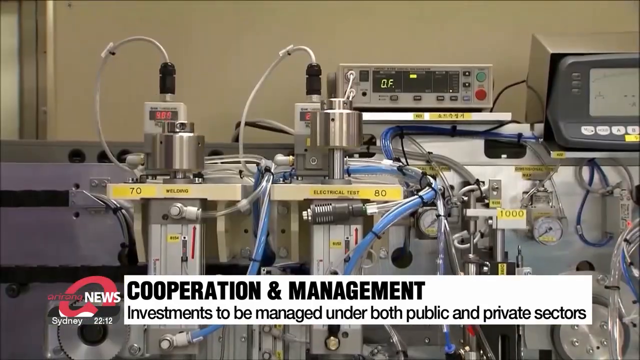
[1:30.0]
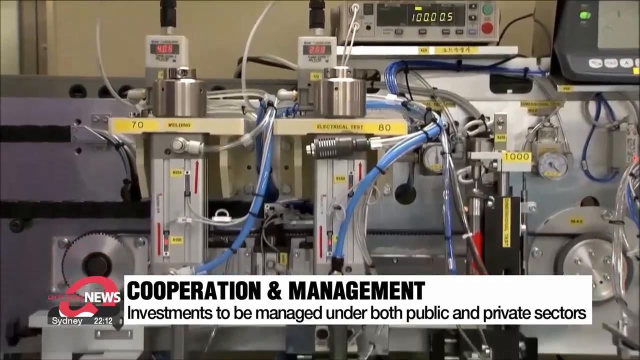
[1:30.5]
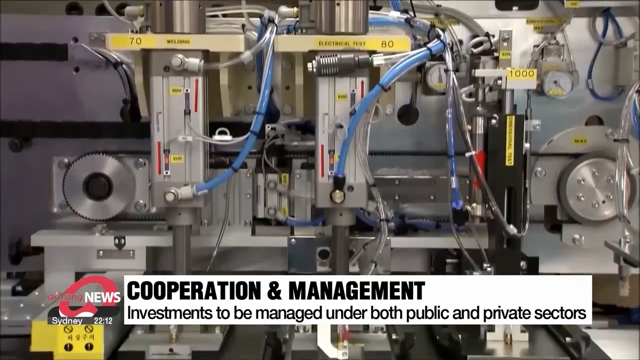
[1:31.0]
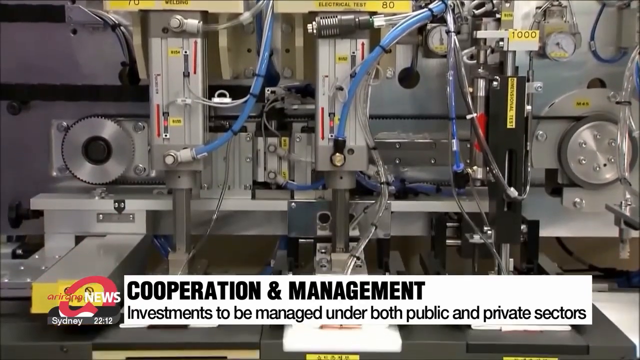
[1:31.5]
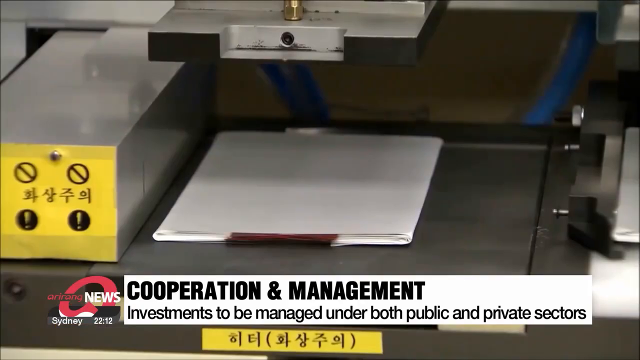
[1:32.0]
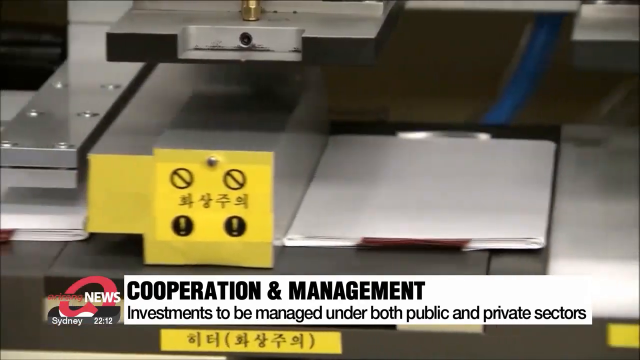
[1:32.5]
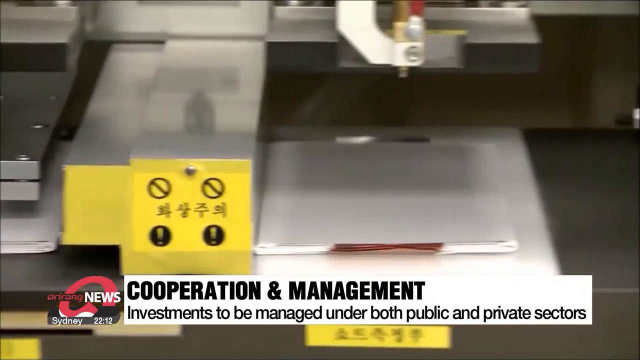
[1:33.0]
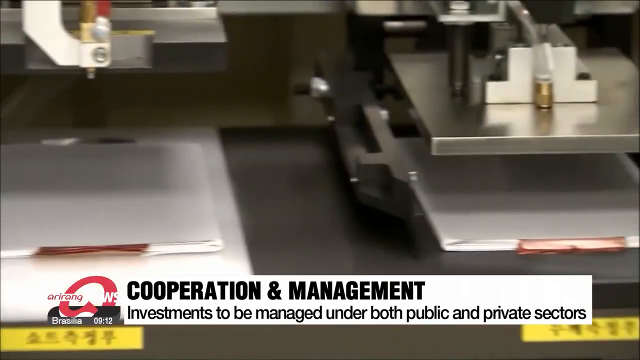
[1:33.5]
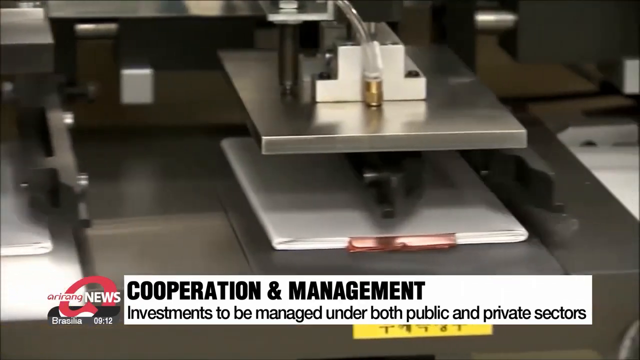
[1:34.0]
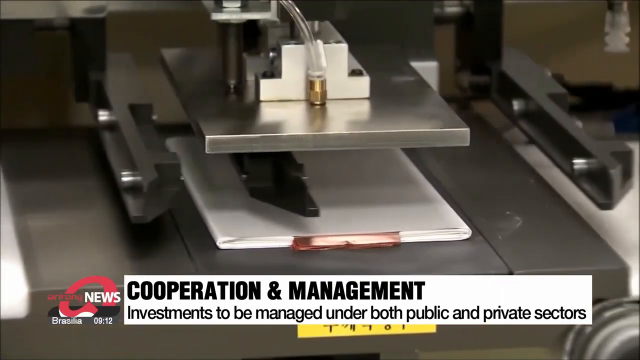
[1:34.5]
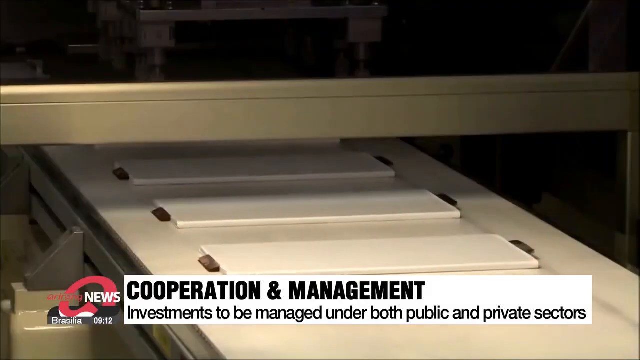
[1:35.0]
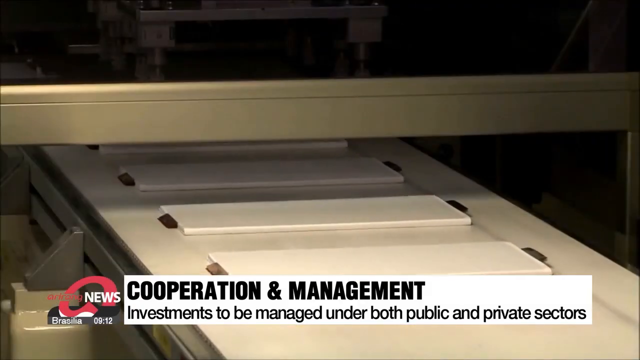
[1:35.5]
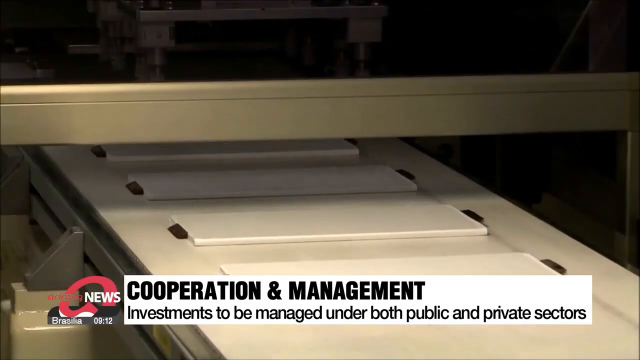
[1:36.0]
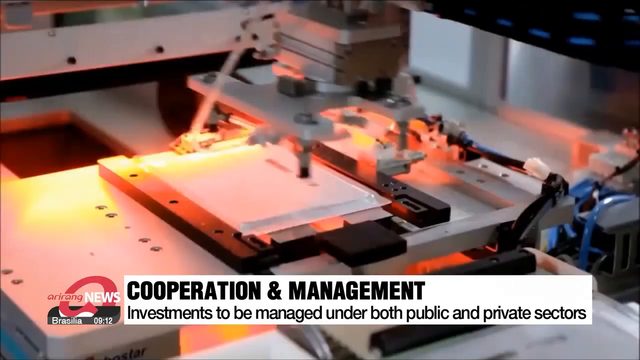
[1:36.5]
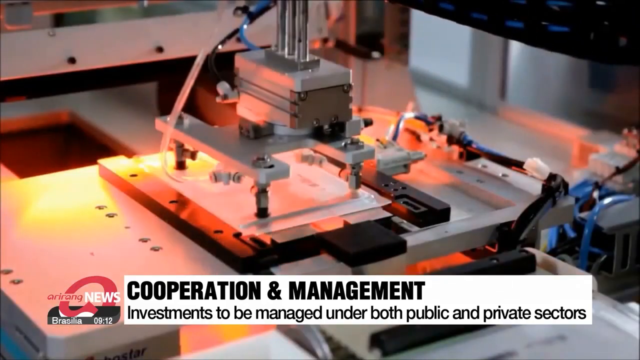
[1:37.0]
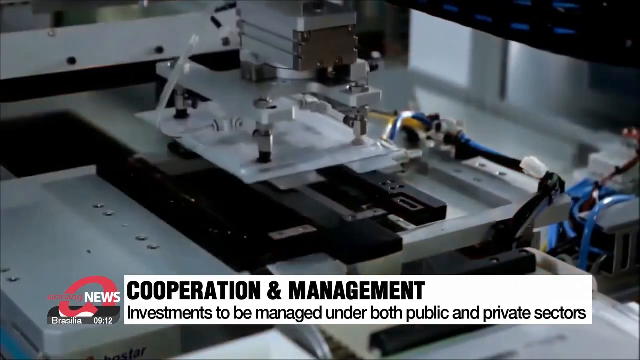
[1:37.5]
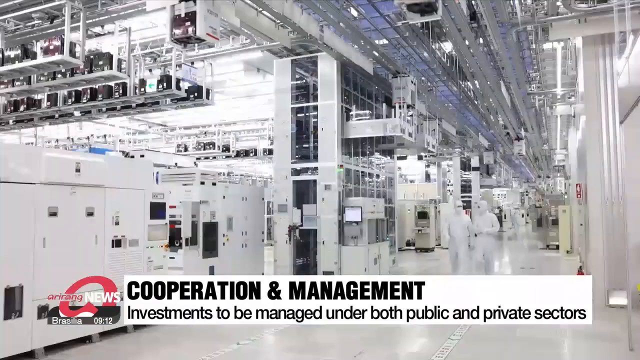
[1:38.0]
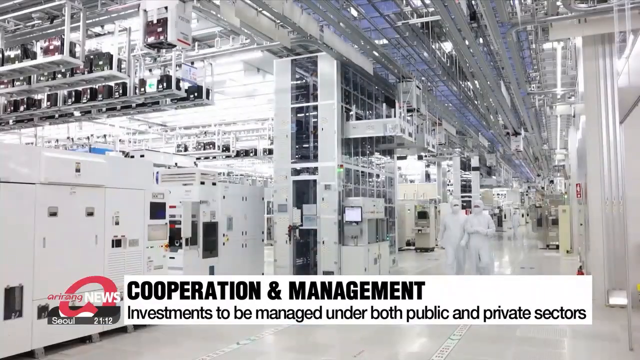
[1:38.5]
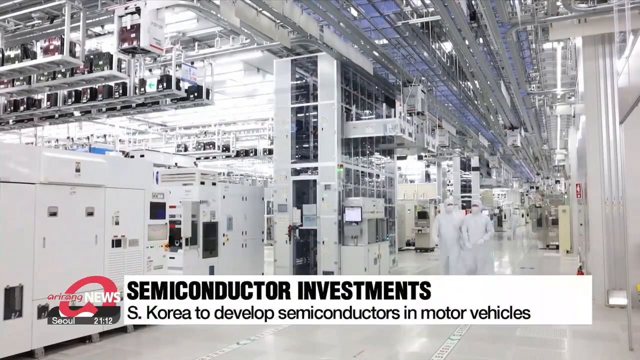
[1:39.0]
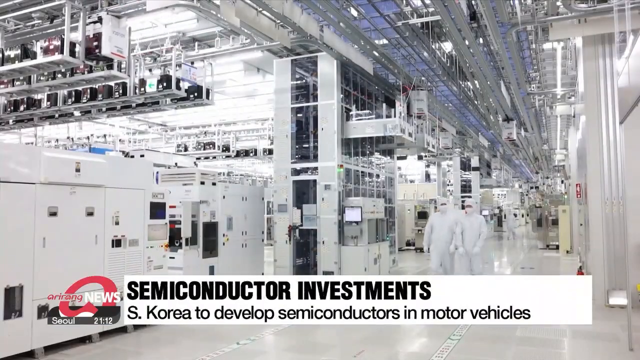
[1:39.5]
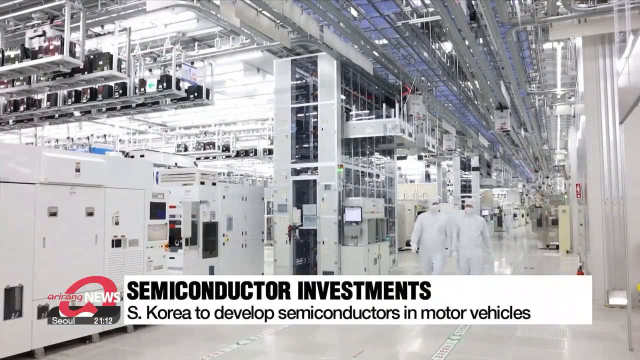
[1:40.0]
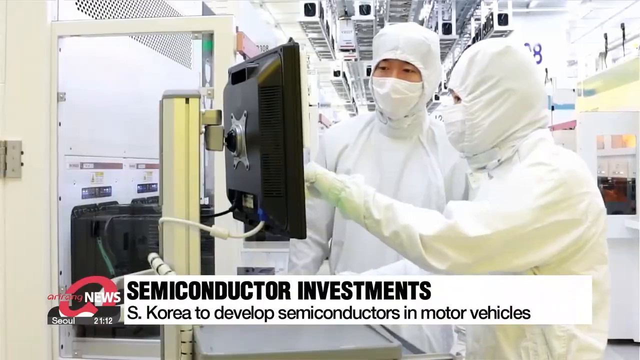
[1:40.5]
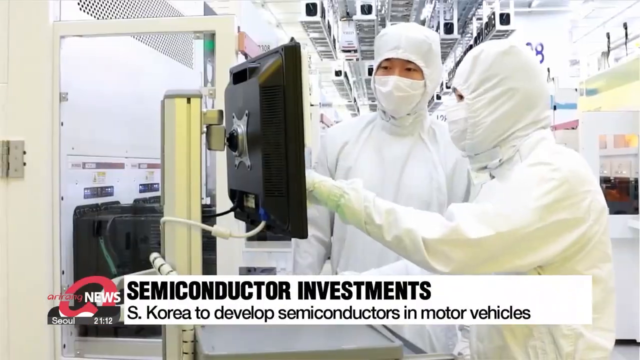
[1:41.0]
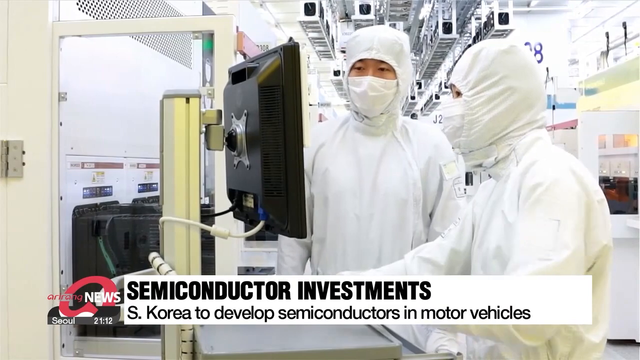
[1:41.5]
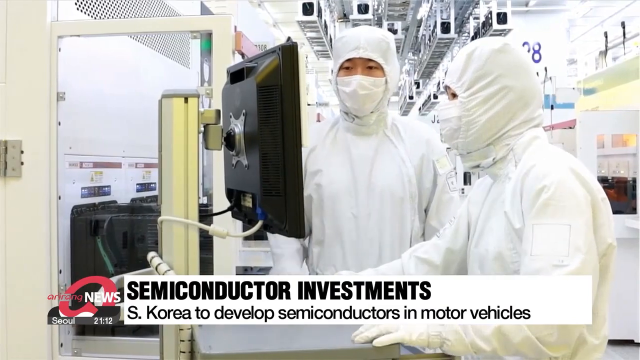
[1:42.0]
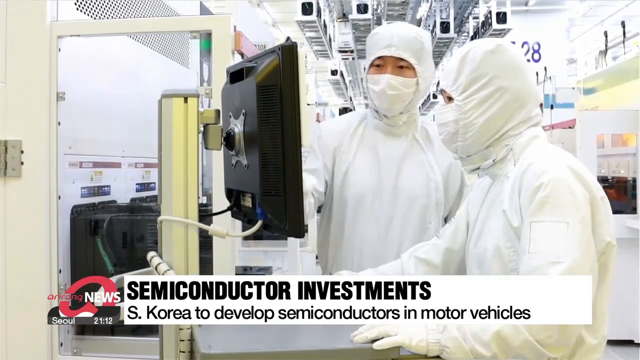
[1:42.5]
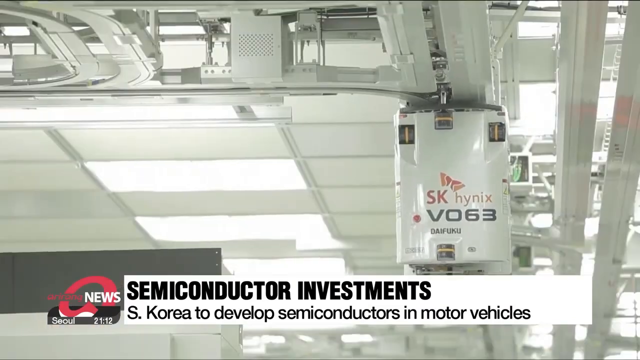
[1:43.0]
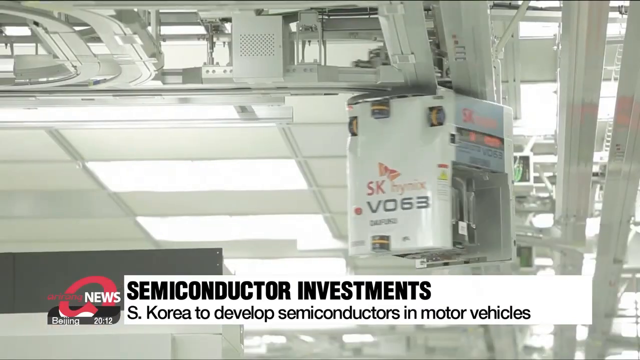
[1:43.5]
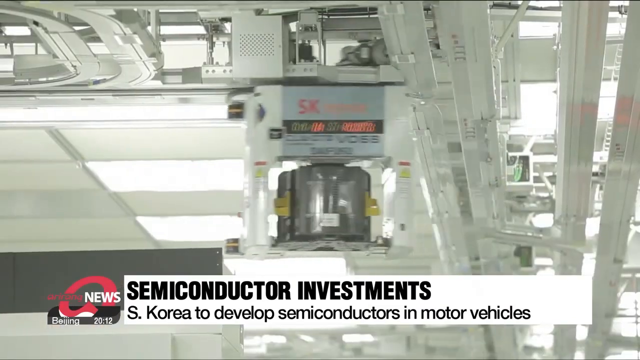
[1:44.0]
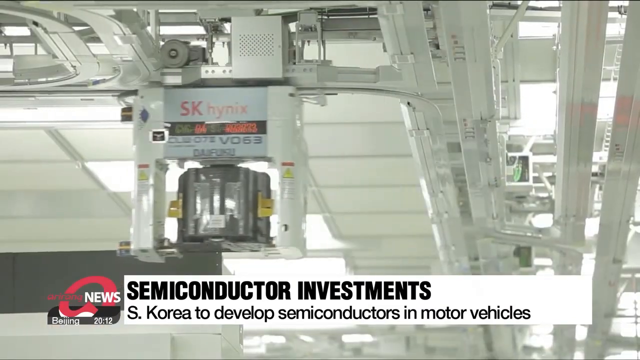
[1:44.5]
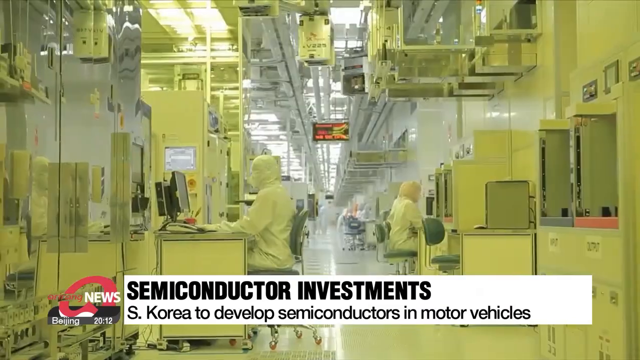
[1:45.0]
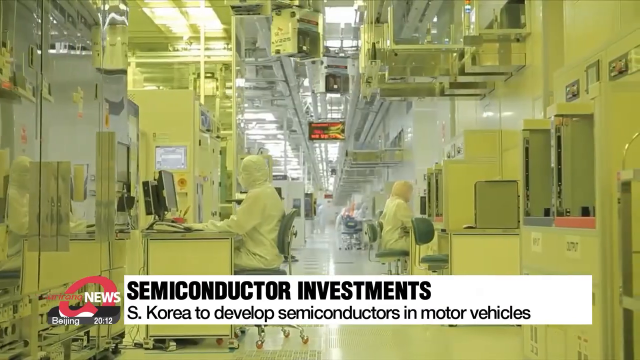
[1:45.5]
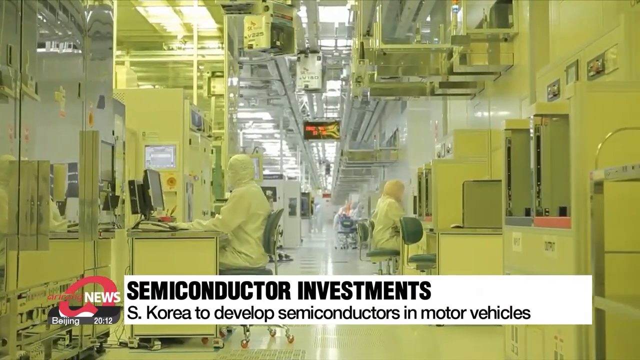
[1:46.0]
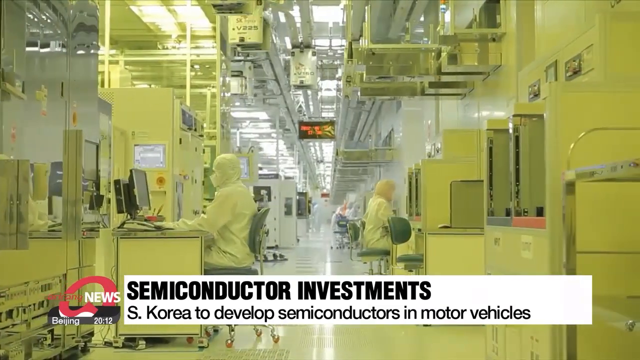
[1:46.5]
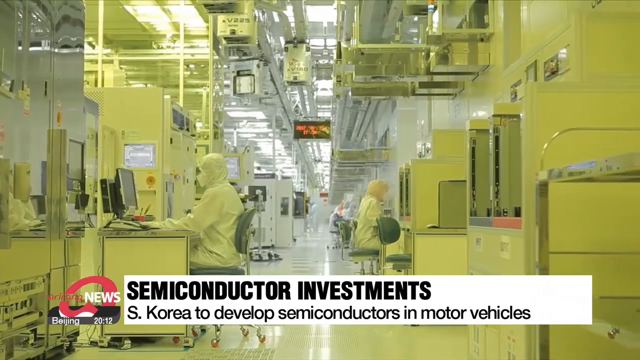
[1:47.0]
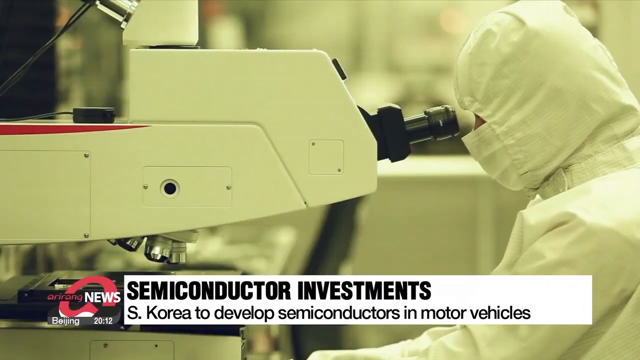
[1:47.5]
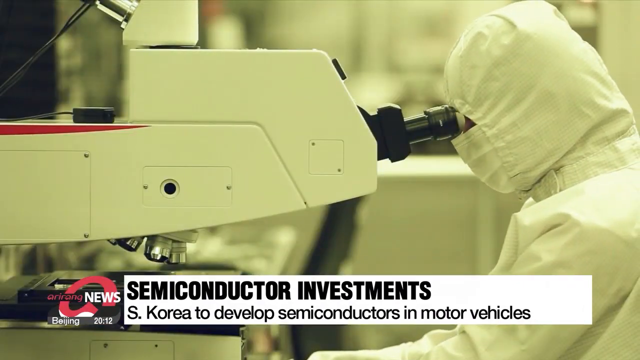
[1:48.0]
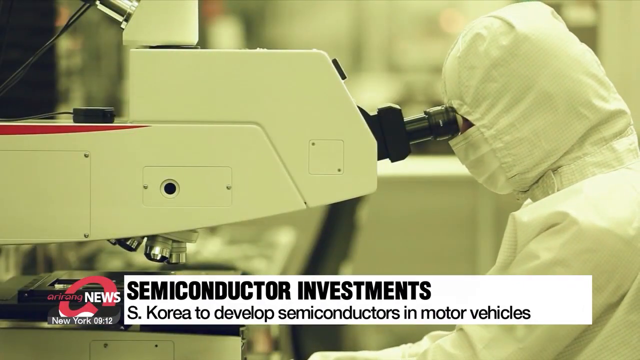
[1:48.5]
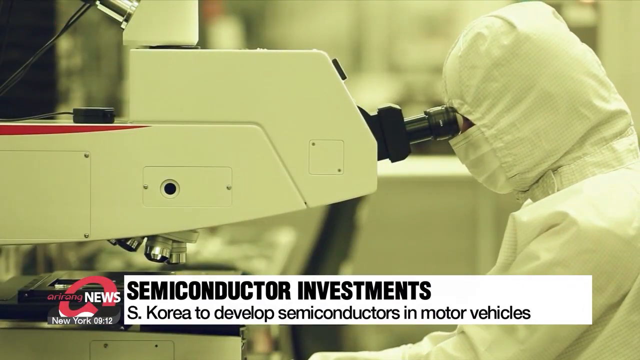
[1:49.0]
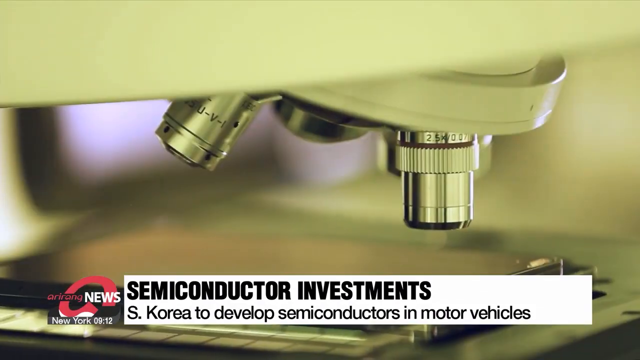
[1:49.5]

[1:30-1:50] More robotics appear, with lots of tubes and wires and very complicated machinery whose pieces move up and down and press. An assembly line of robotics slides something flat and white sideways, and another robotic arm sticks and grabs something. Text at the bottom of the screen reads "semiconductor investments" and "South Korea to develop semiconductors in motor vehicles." Two people dressed all in white, with their heads and mouths covered so only their eyes show, look at a computer screen and talk. White machinery moves across the ceiling on a track, marked "SK Hynix," "VO63" and "Daifuku," and turns a corner. In another room with a yellow tint over everything, people in white covers sit at computers surrounded by machinery, with machinery moving around the ceiling. Another person in white looks into a microscope.